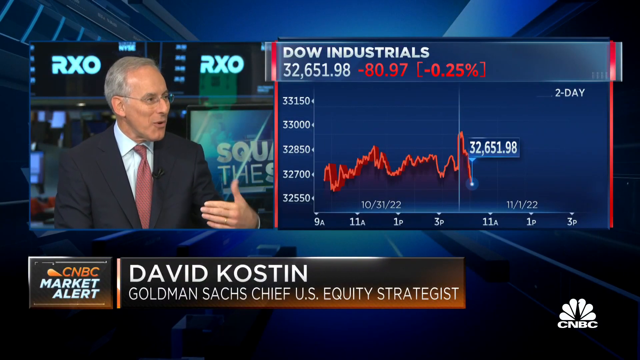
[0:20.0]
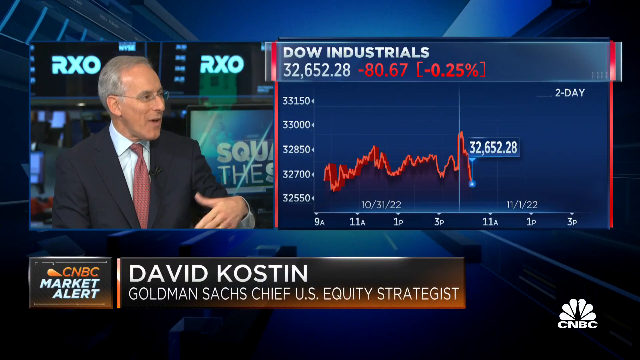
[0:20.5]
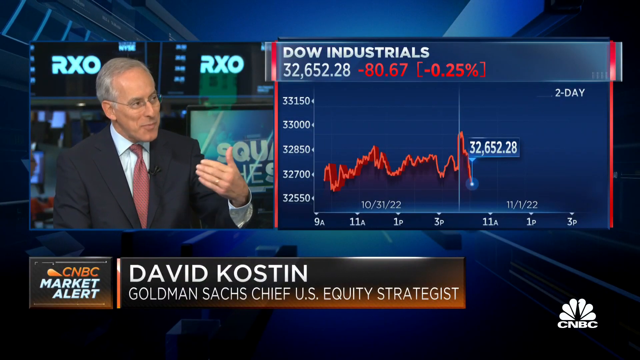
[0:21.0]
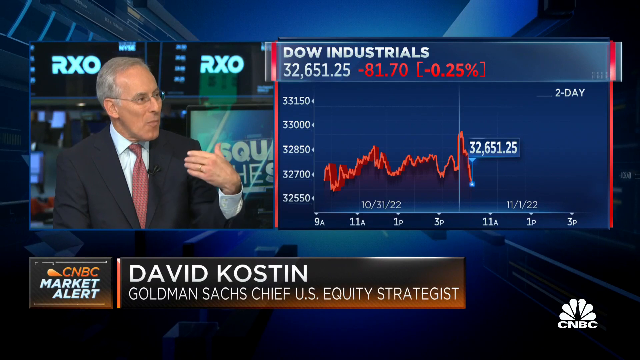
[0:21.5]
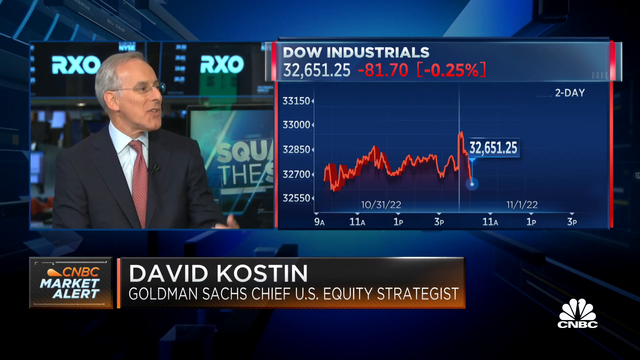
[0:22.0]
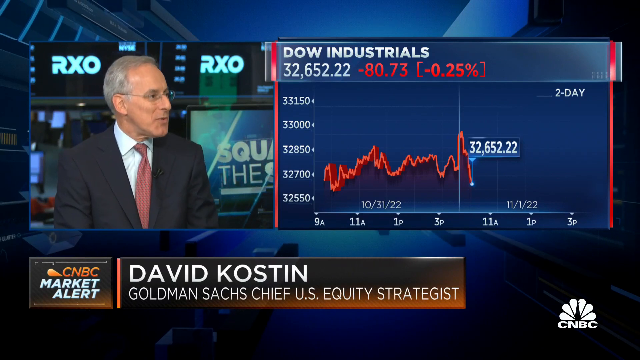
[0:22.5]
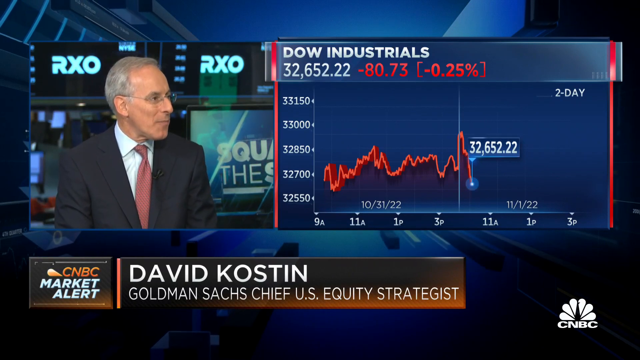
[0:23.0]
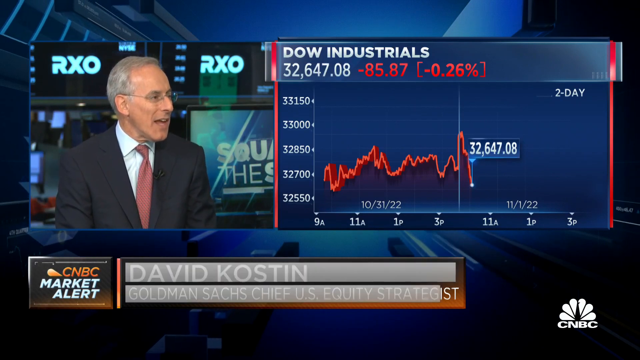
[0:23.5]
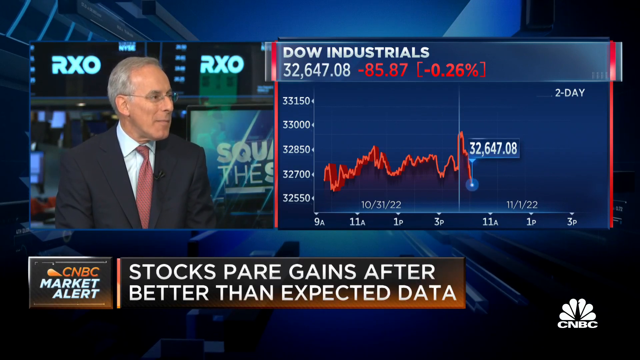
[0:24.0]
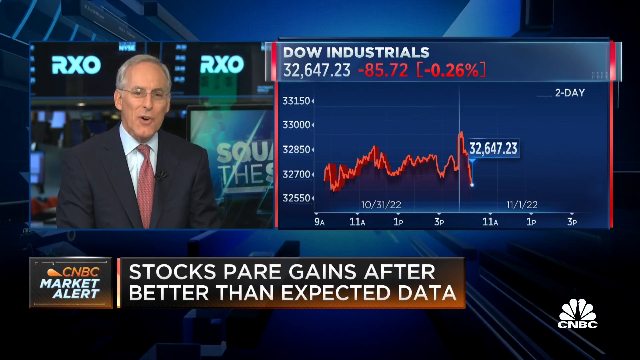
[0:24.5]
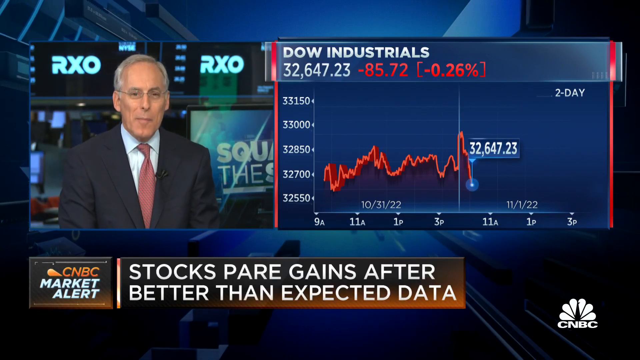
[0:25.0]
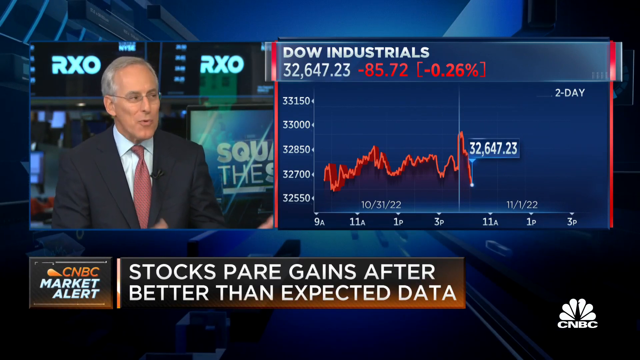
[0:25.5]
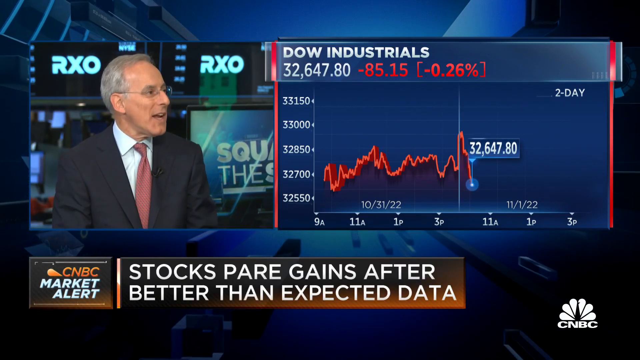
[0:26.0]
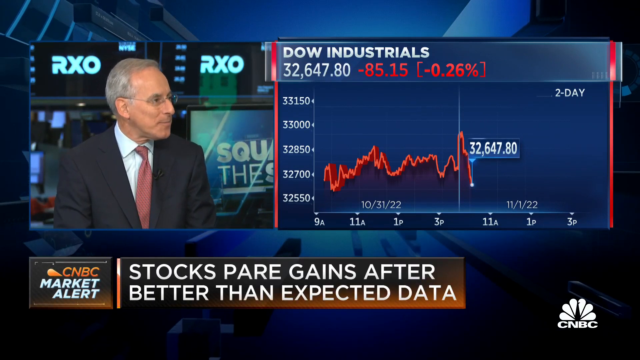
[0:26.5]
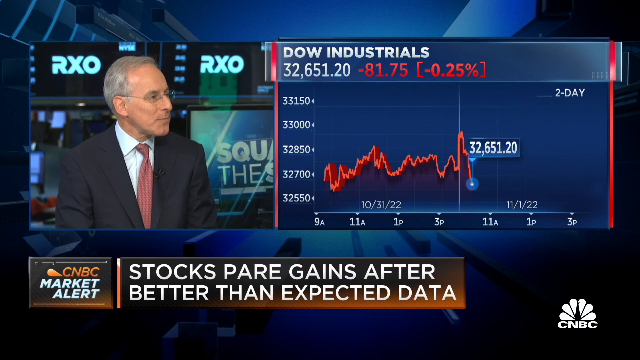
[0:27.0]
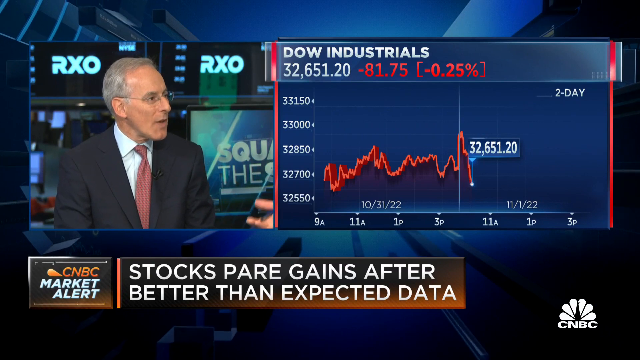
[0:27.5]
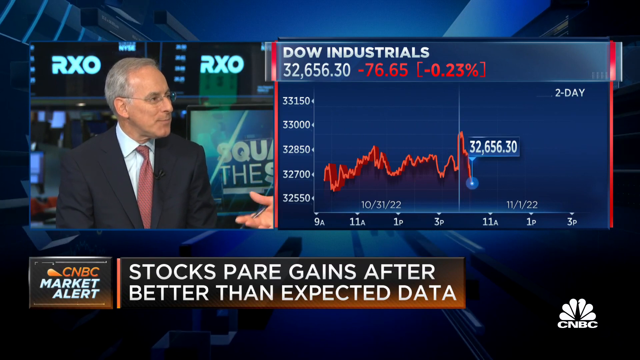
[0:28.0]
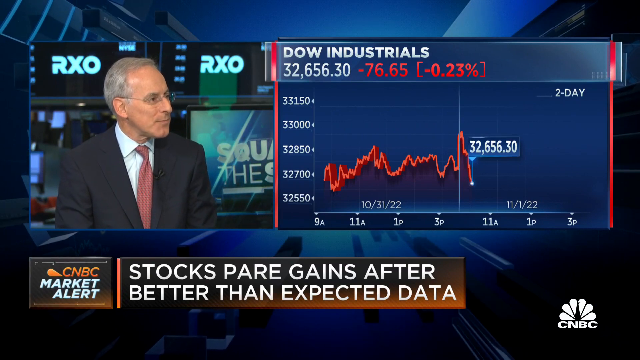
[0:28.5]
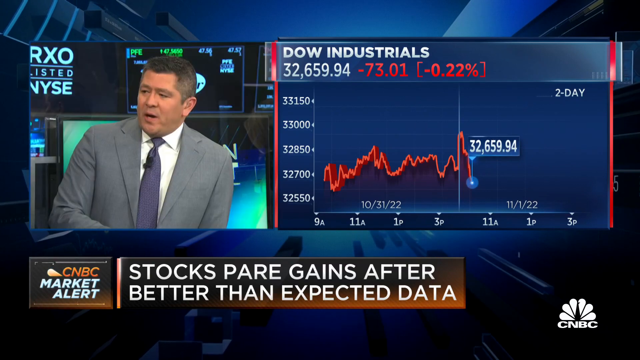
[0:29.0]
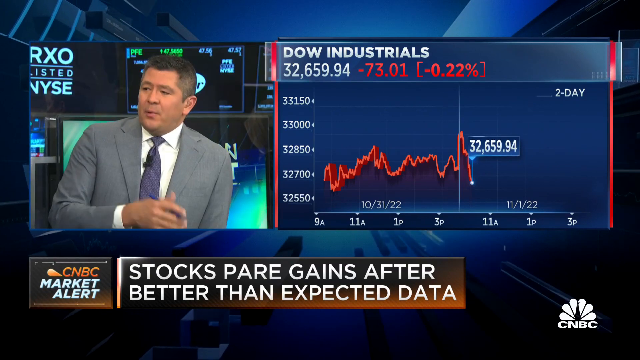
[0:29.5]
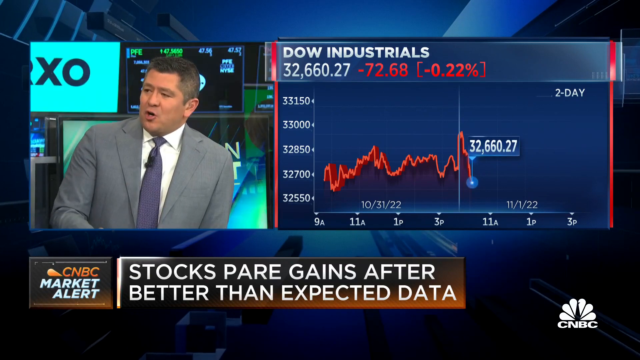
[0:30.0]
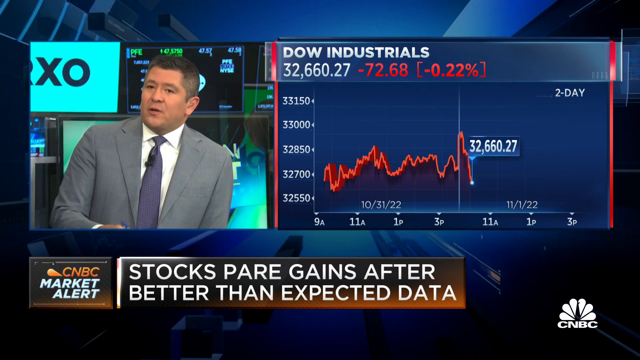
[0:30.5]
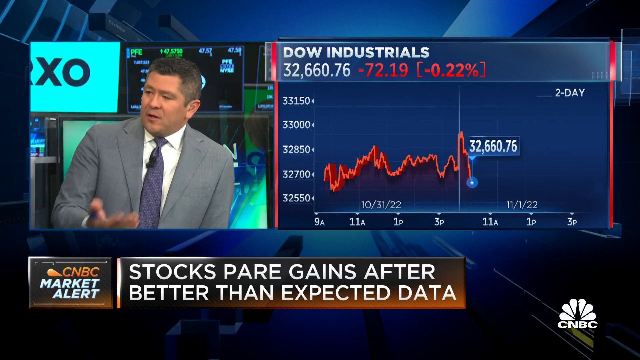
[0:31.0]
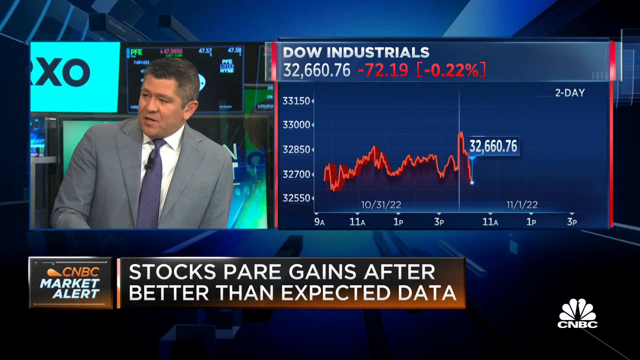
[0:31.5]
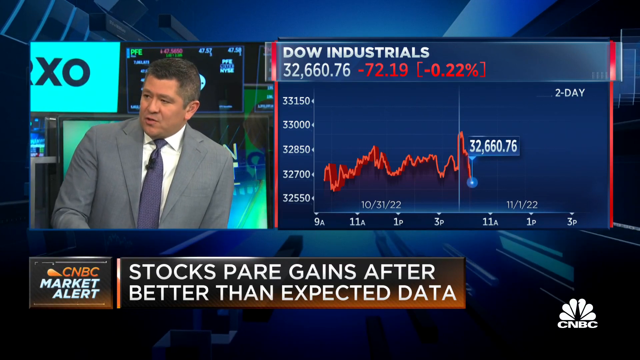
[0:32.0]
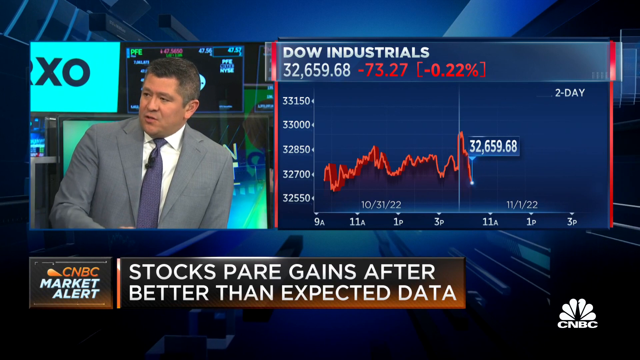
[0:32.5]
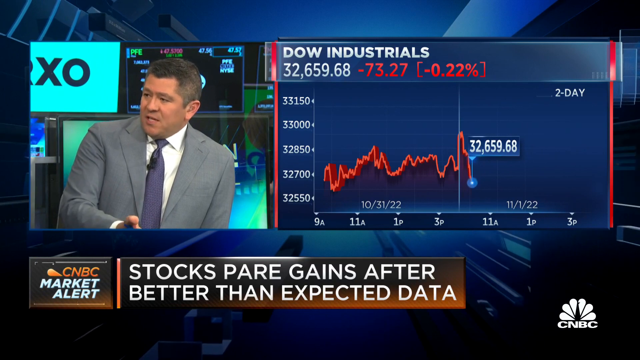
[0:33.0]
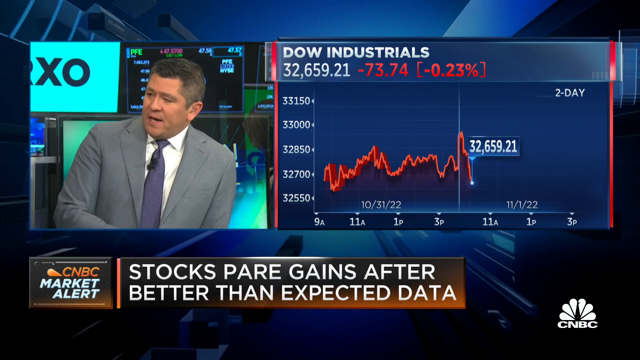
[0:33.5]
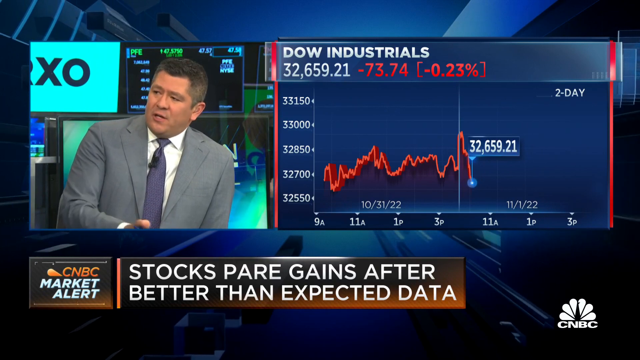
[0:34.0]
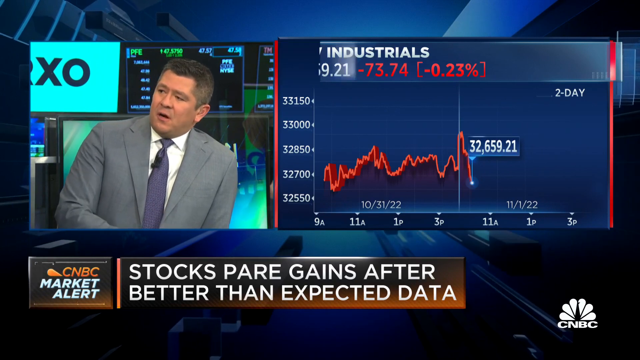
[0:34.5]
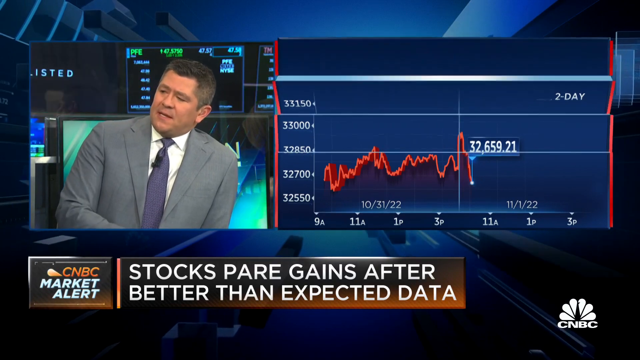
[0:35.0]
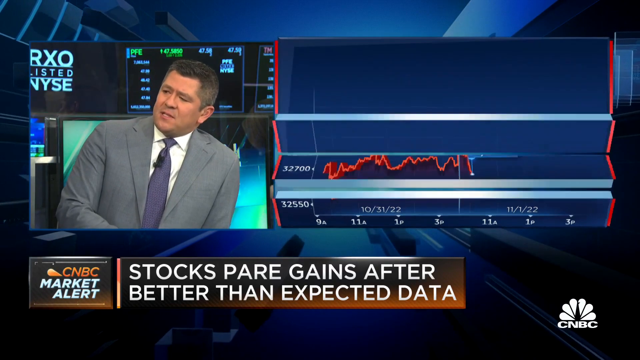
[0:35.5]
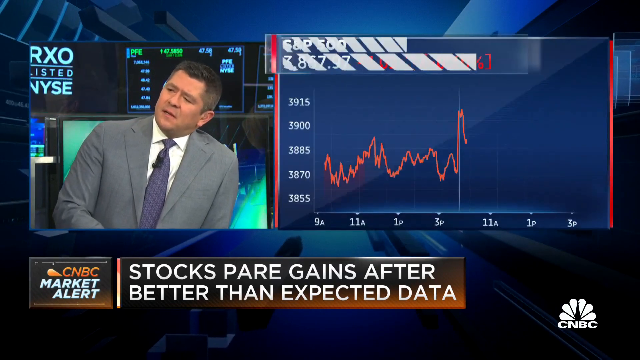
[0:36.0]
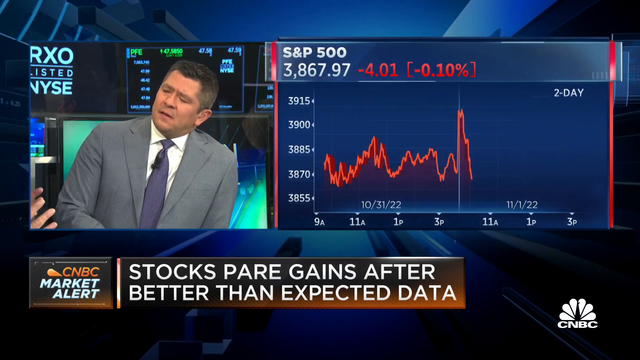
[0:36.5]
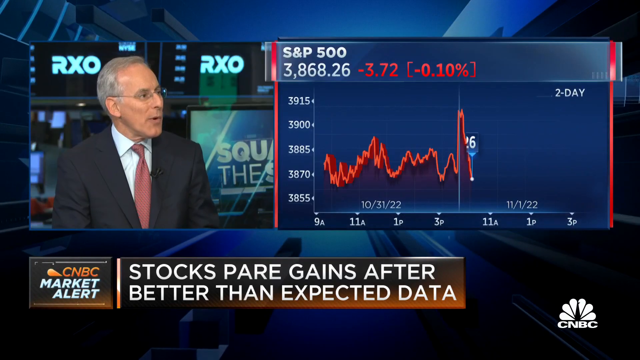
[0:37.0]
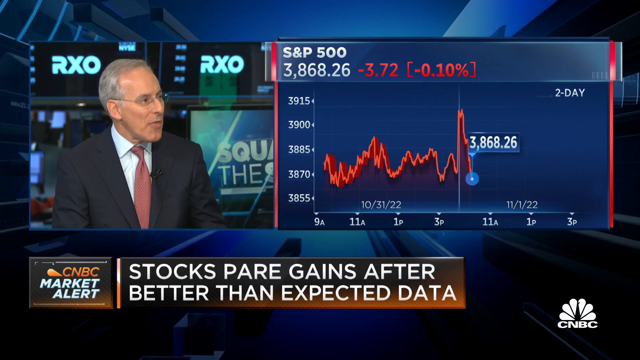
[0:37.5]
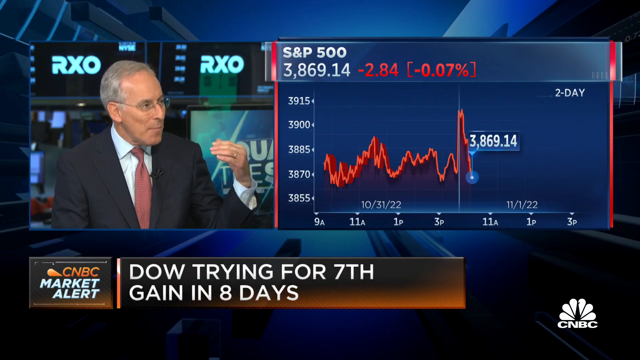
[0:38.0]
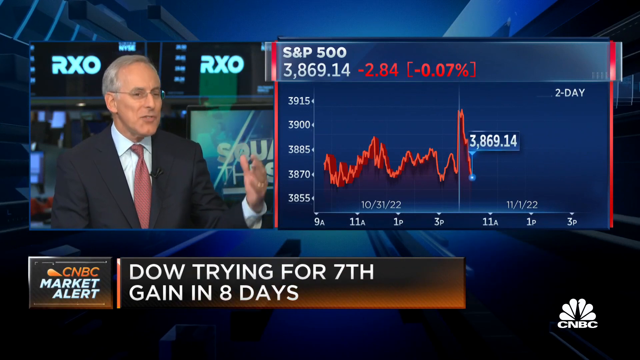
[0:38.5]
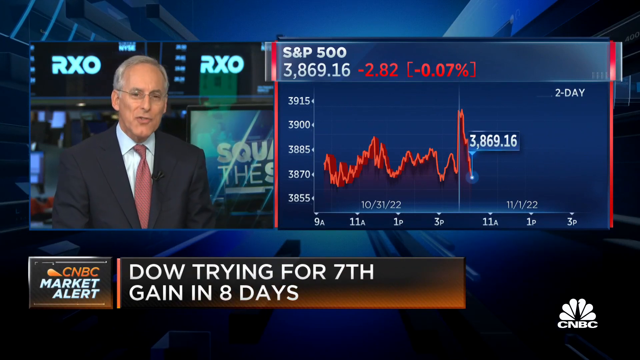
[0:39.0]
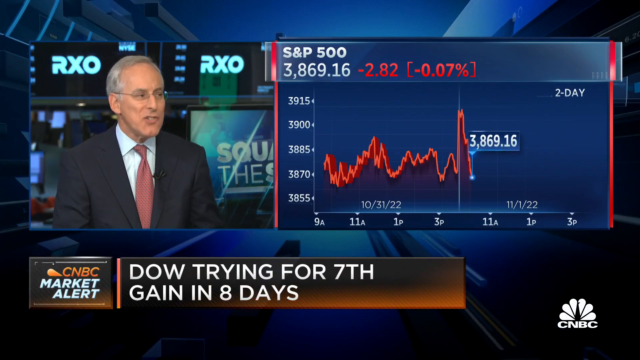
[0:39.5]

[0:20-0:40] Another man, in a green blazer, white shirt and purple tie, talks to the man in the black blazer. The S&P 500 is shown down 3.72 between October 31st, 2022 and November 1st, 2022. The Dow is trying for a seventh gain in eight days, and then the video cuts. The main speaker is the older man, who looks around 60, in the black blazer, white shirt, red tie and glasses: David Costin, Goldman Sachs chief U.S. equity strategist. A graph shows how the Dow has been moving from October 31st, 2022 to November 1st, 2022.